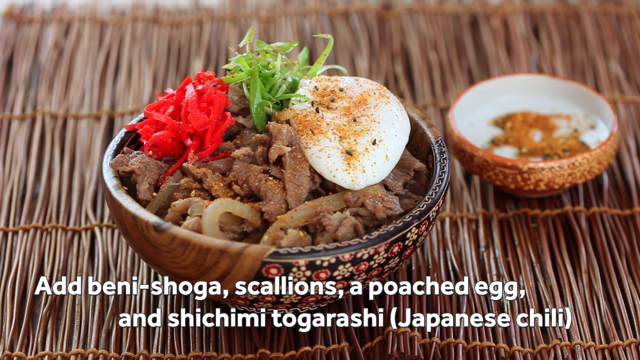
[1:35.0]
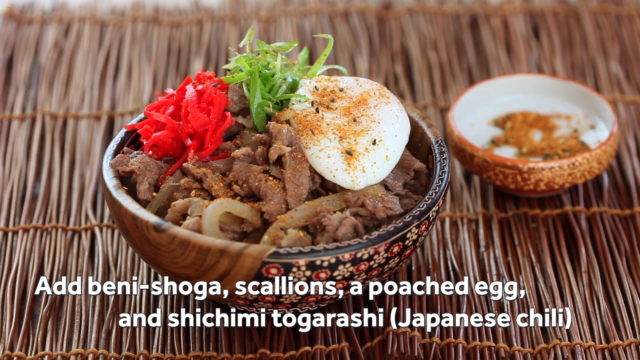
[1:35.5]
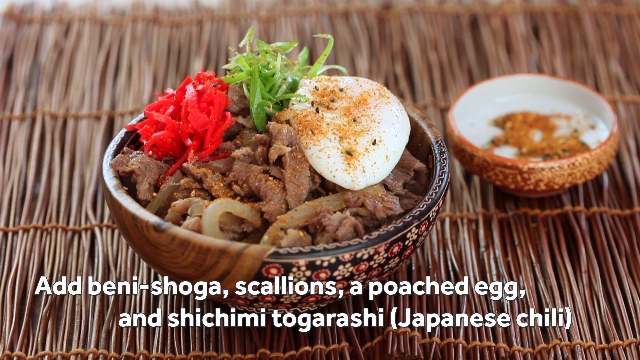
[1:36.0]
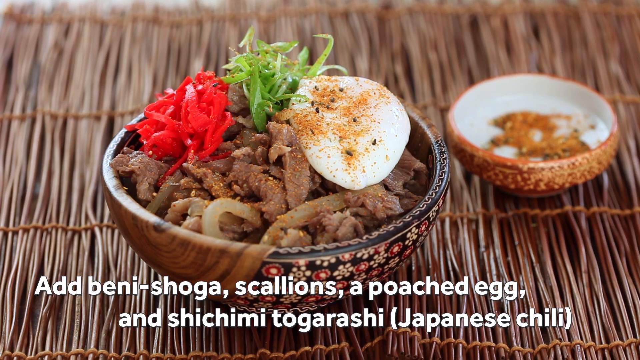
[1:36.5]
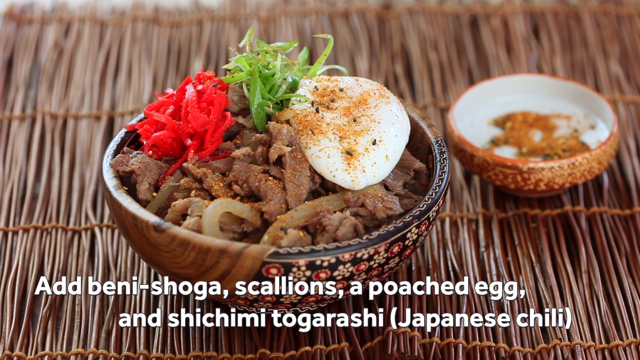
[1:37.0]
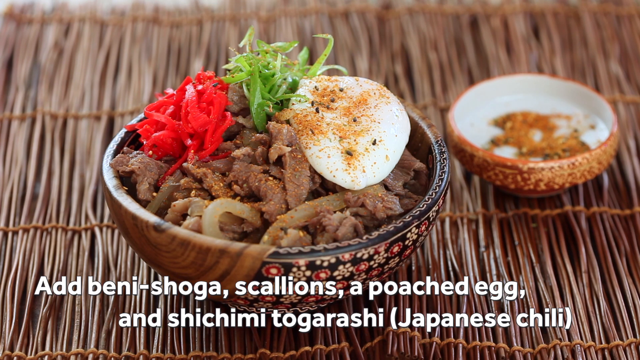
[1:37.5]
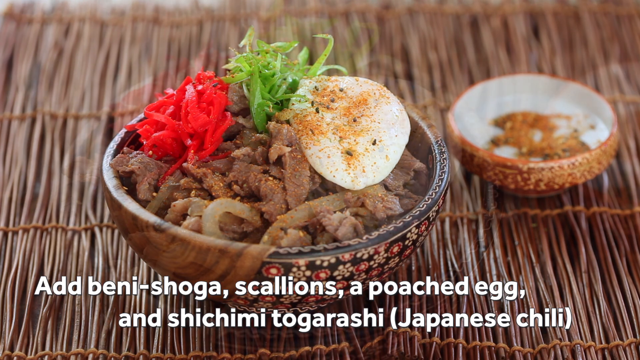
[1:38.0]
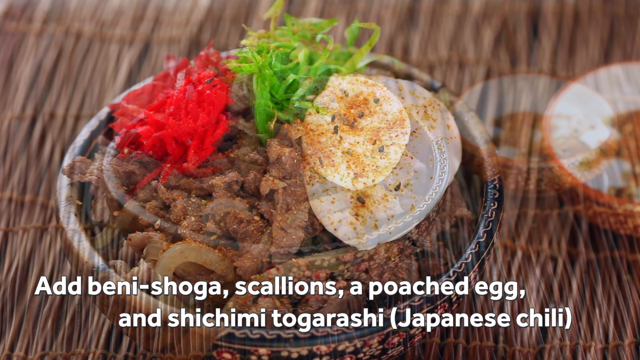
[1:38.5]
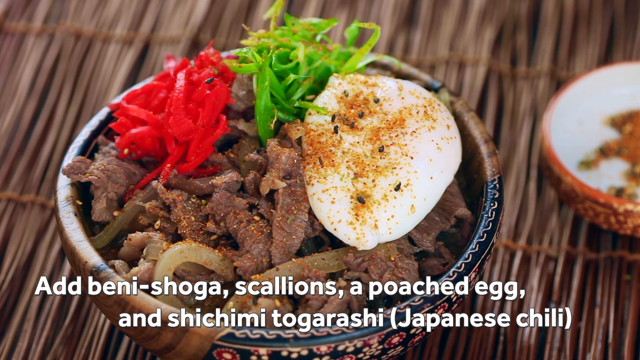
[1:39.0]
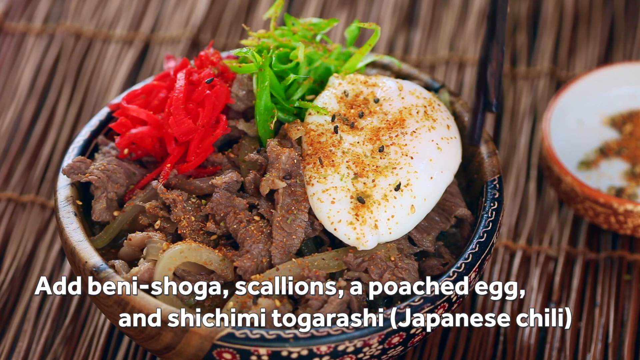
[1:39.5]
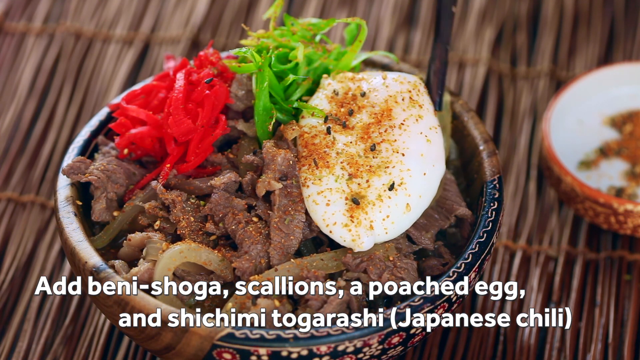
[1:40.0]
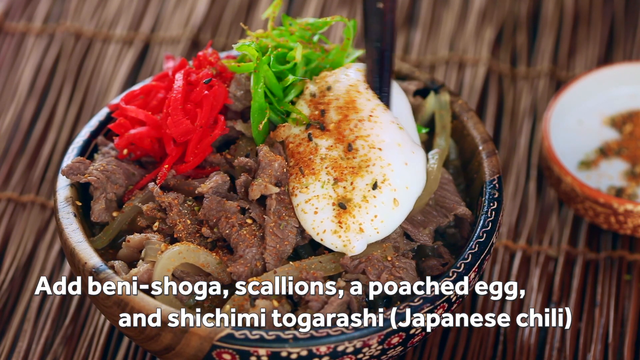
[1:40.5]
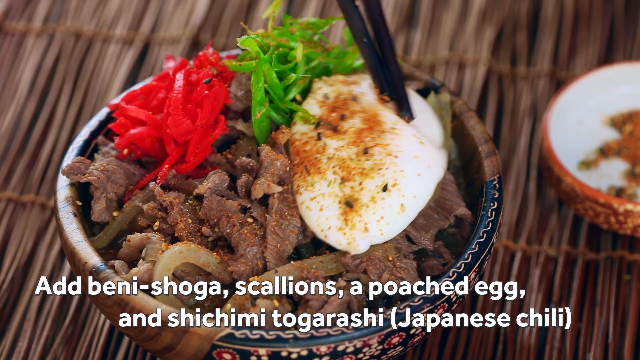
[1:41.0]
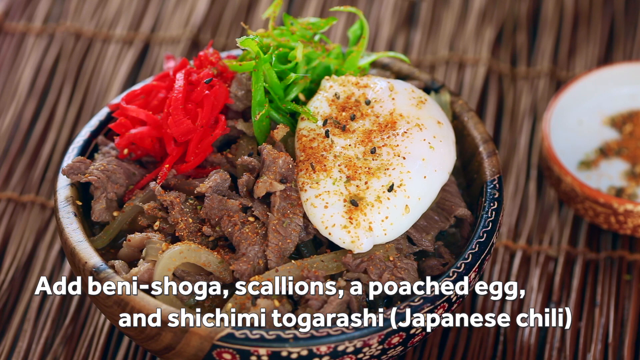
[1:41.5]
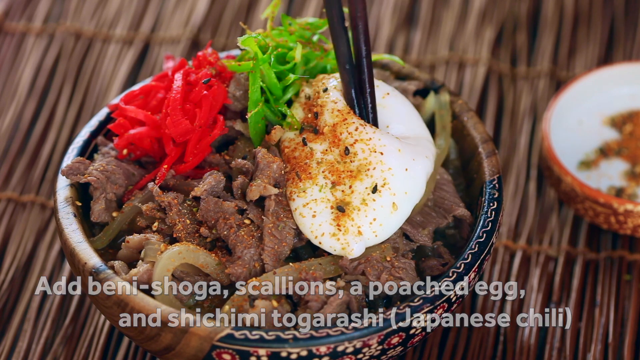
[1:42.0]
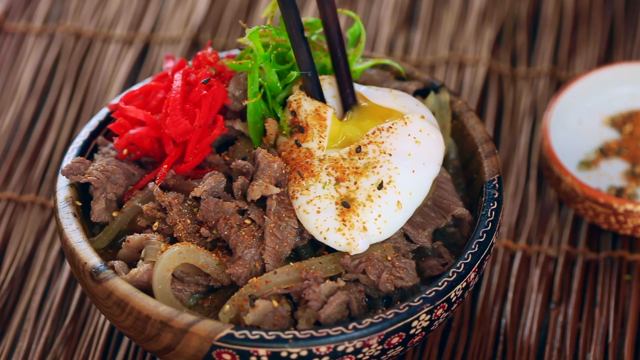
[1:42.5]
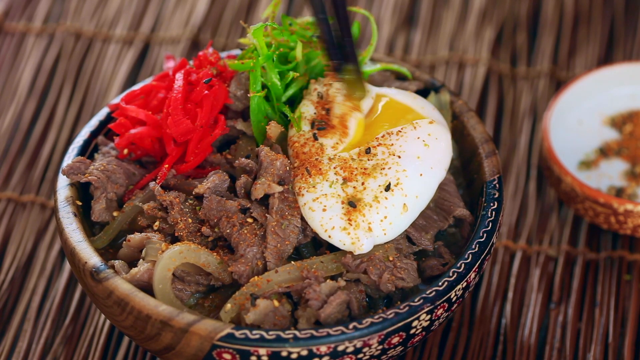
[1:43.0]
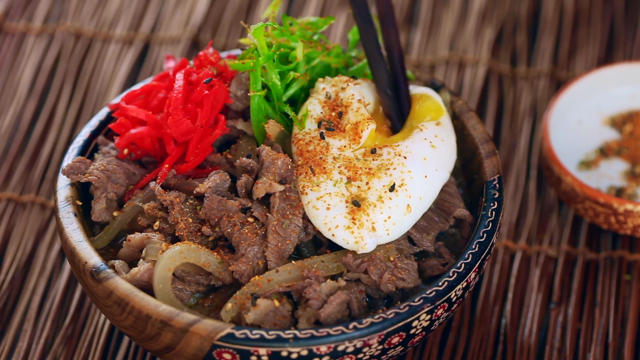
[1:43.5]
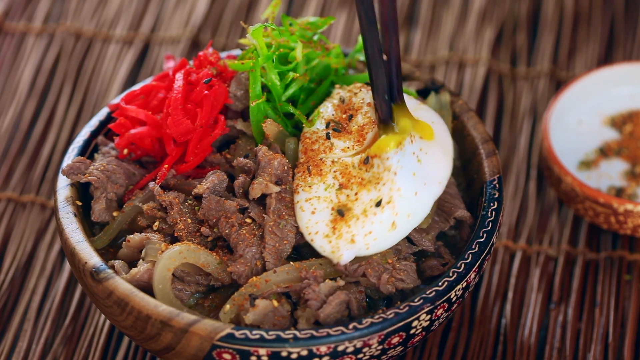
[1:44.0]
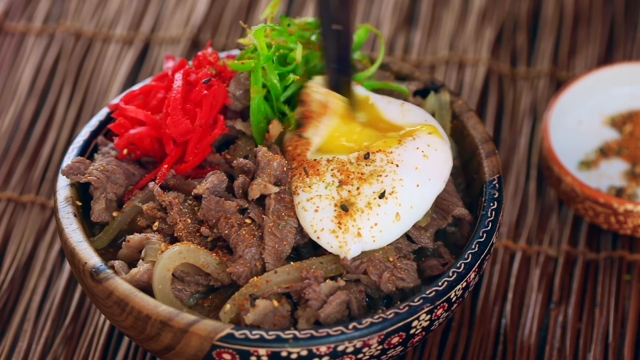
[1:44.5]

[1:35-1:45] An image of the beef and rice dish appears with white lettering at the bottom reading "add beni shoga, scallions, a poached egg, and shichimi togarashi (Japanese chili)". It shows the bowl, then a closer image of it, and the tips of the very dark chopsticks poke into the poached egg on top of the meat mixture. The very runny, bright yellow yolk comes out, and he starts moving the yolk around as if about to spread it over the dish, with flakes and seeds still on top of the egg. The bowl is still on the straw mat, with a little bowl of different seeds and spices next to it.